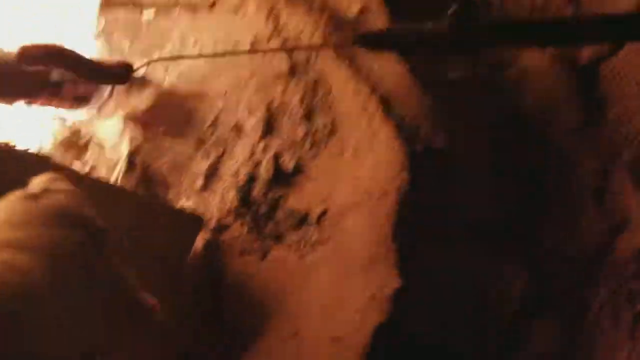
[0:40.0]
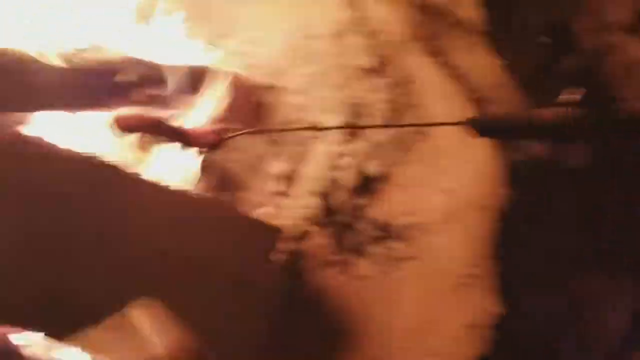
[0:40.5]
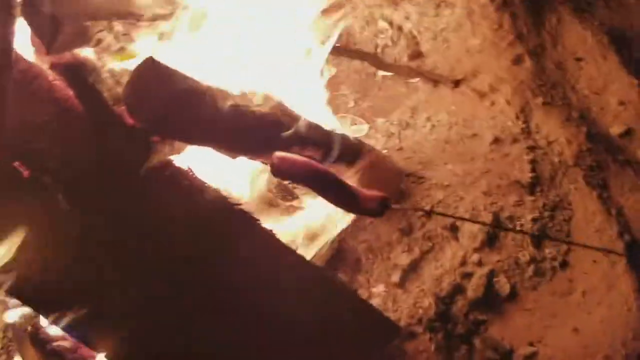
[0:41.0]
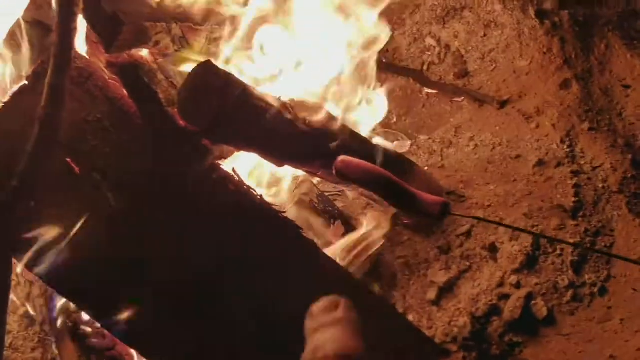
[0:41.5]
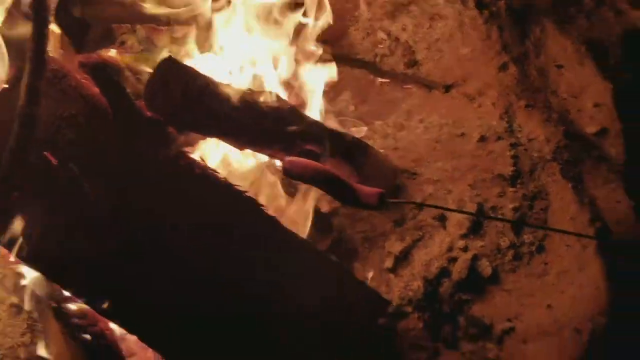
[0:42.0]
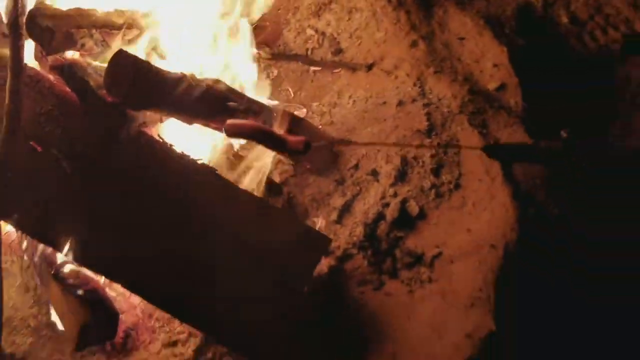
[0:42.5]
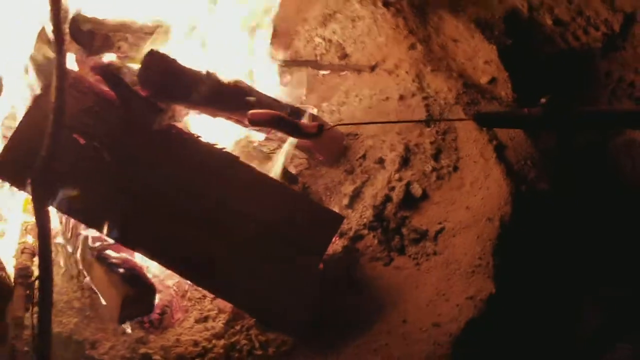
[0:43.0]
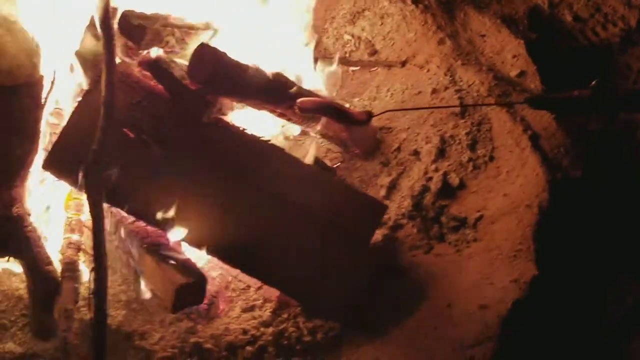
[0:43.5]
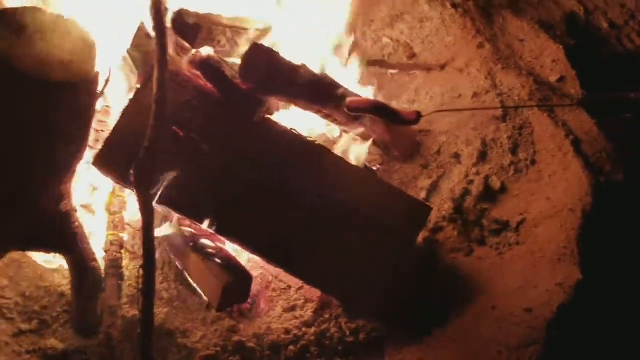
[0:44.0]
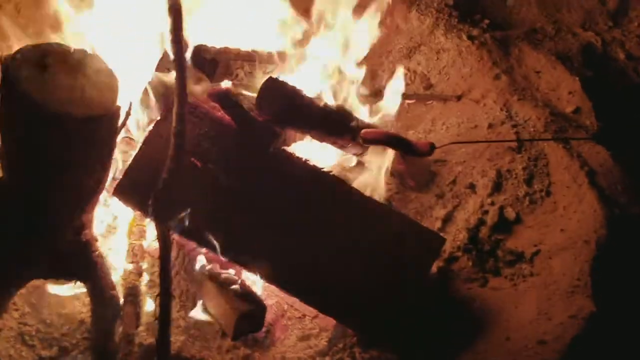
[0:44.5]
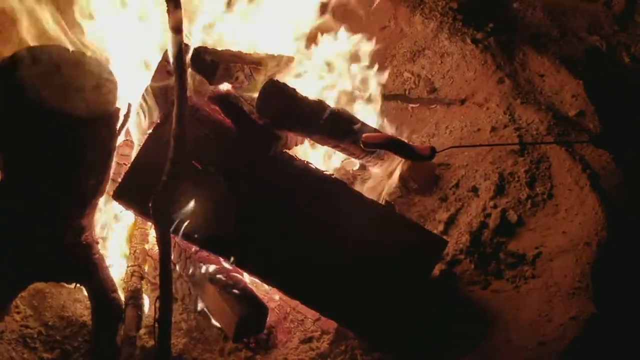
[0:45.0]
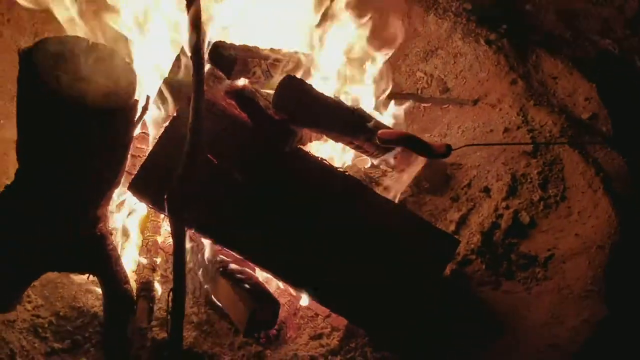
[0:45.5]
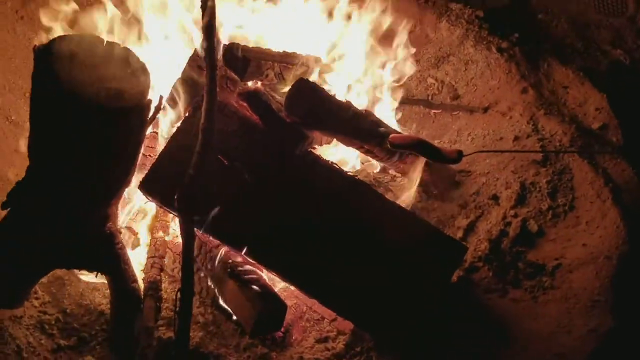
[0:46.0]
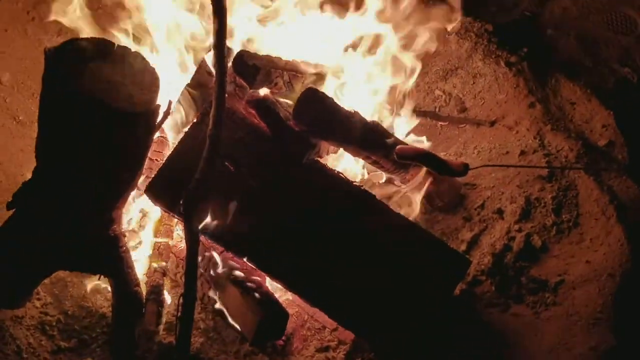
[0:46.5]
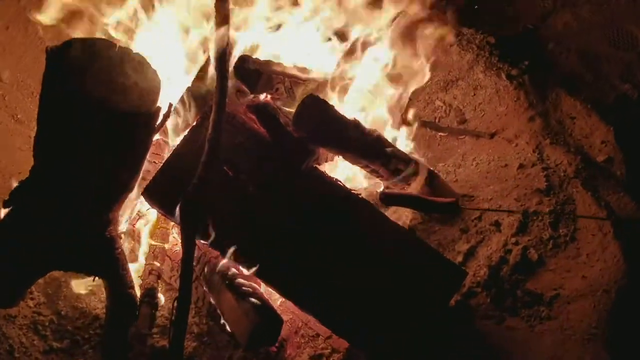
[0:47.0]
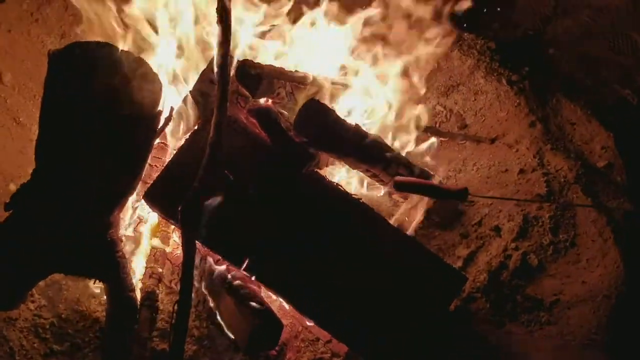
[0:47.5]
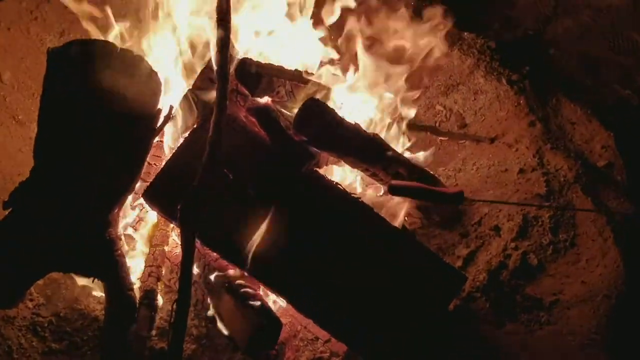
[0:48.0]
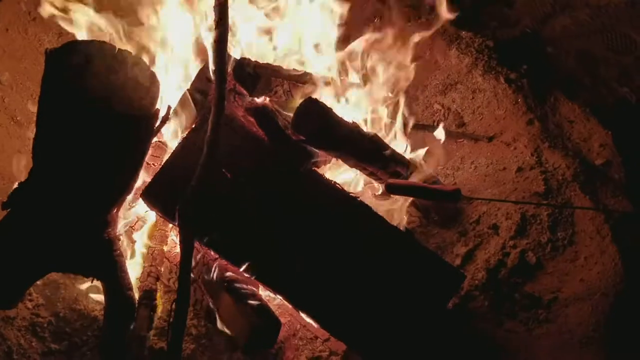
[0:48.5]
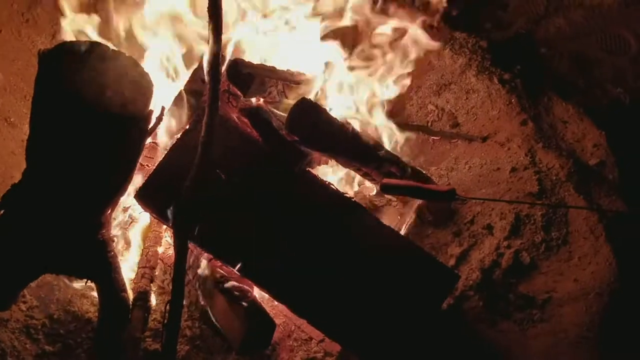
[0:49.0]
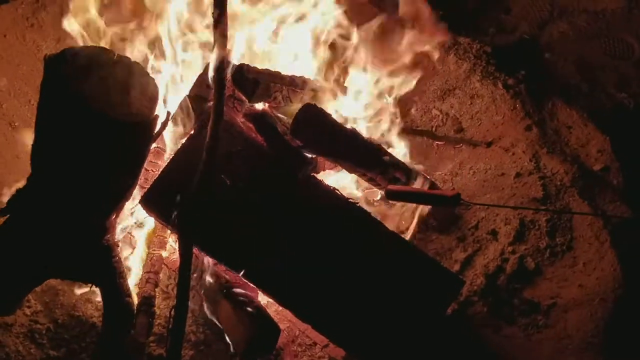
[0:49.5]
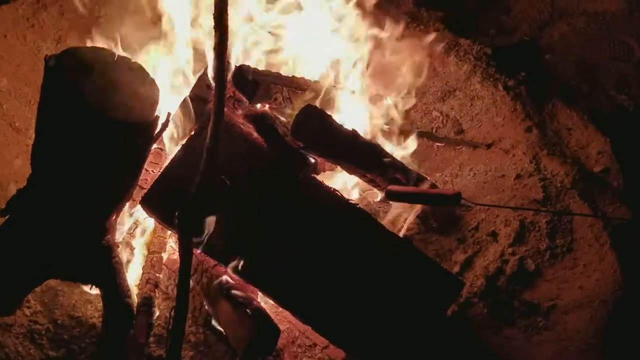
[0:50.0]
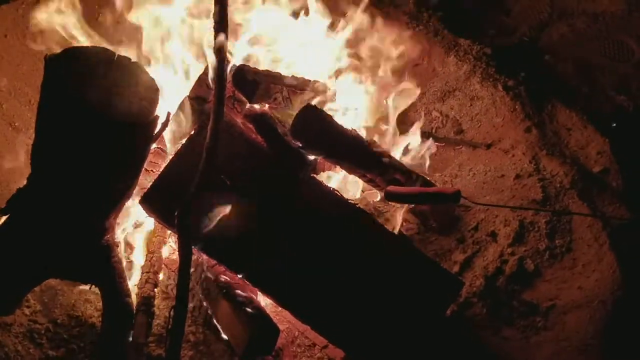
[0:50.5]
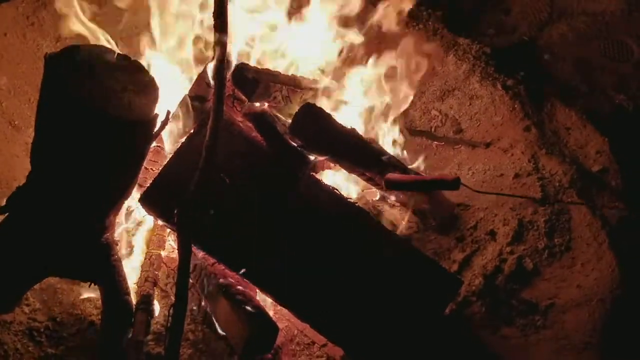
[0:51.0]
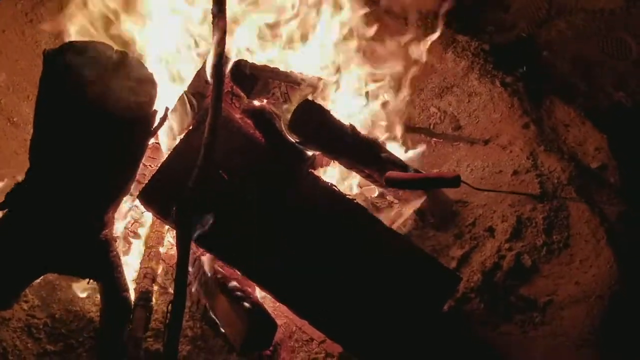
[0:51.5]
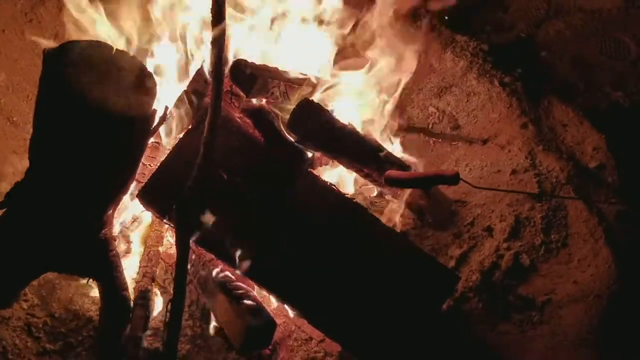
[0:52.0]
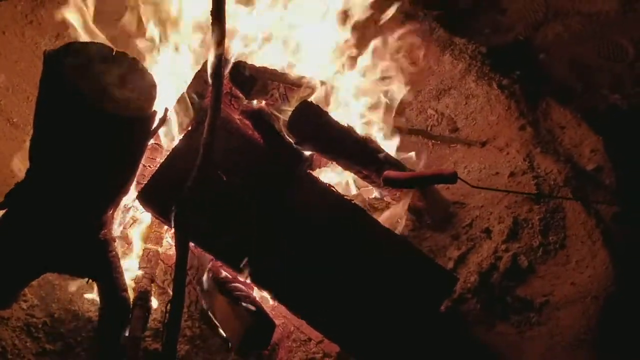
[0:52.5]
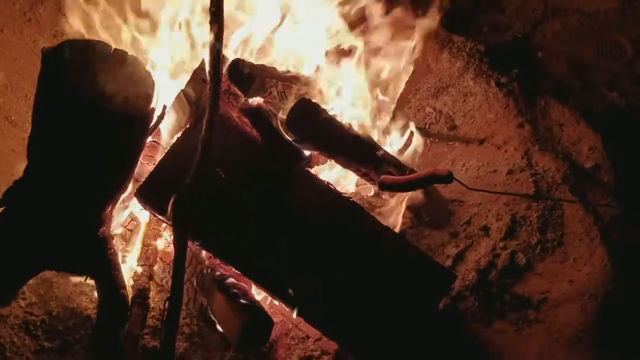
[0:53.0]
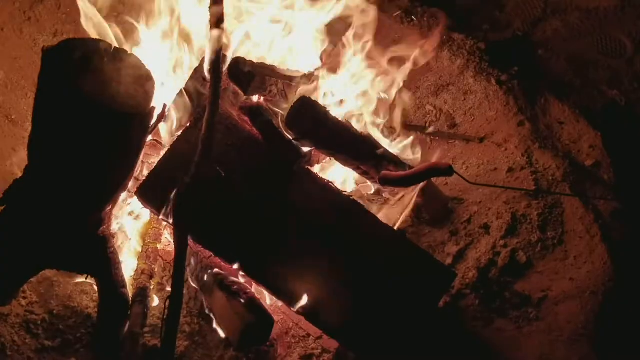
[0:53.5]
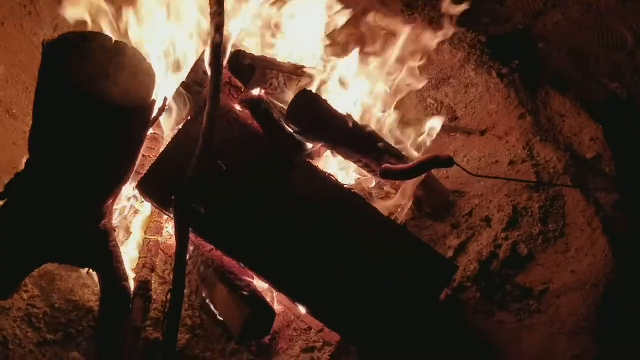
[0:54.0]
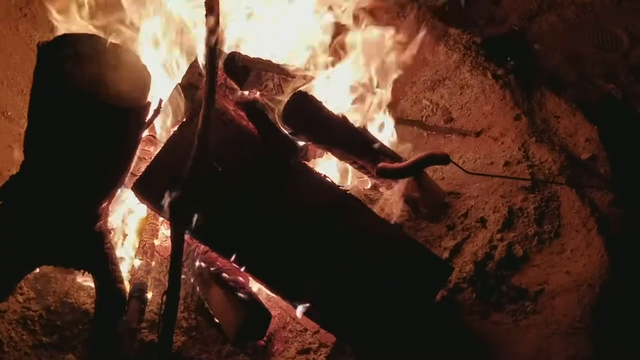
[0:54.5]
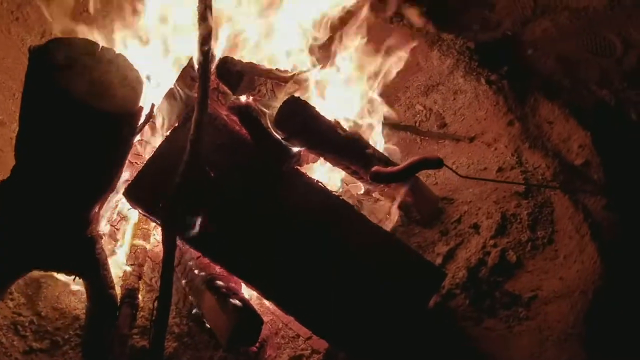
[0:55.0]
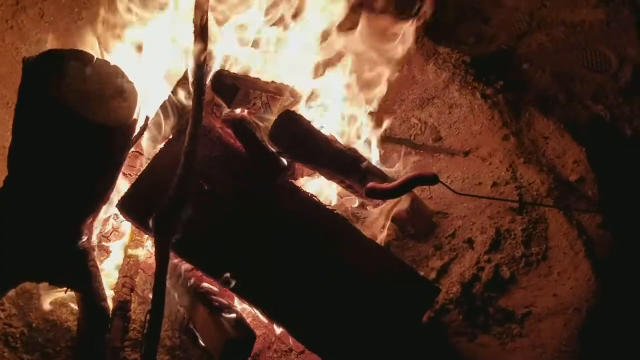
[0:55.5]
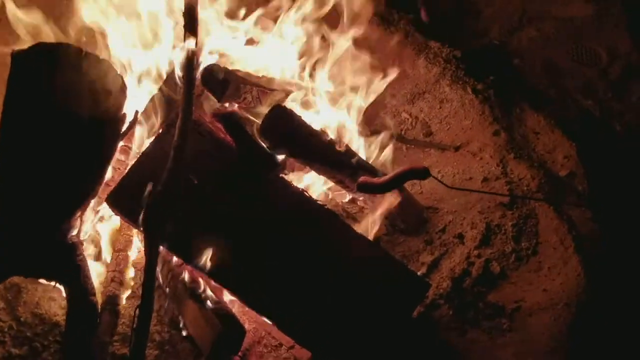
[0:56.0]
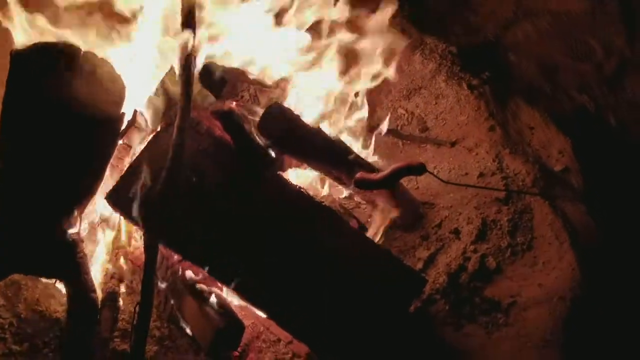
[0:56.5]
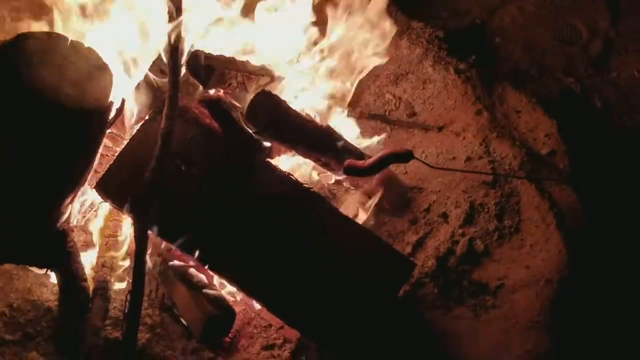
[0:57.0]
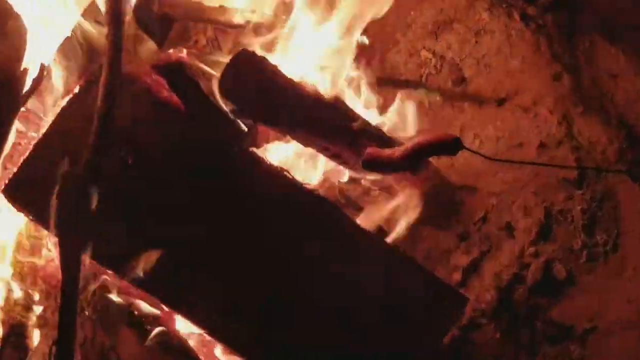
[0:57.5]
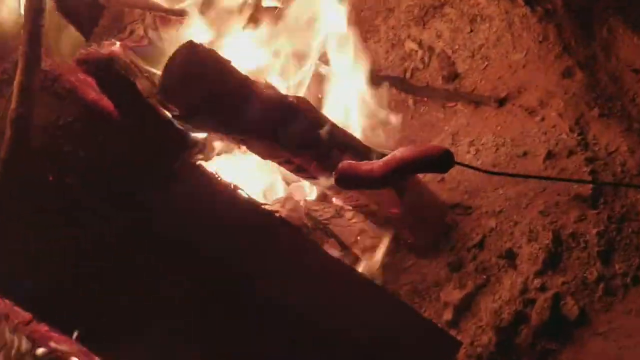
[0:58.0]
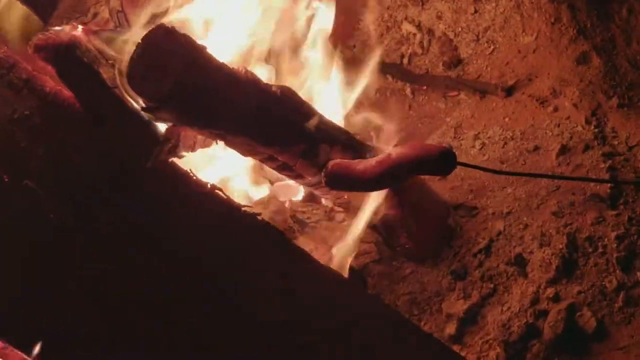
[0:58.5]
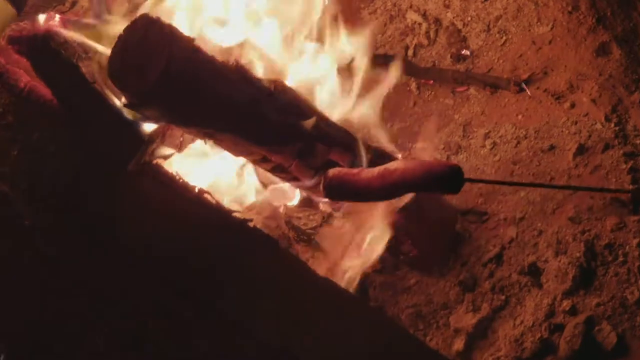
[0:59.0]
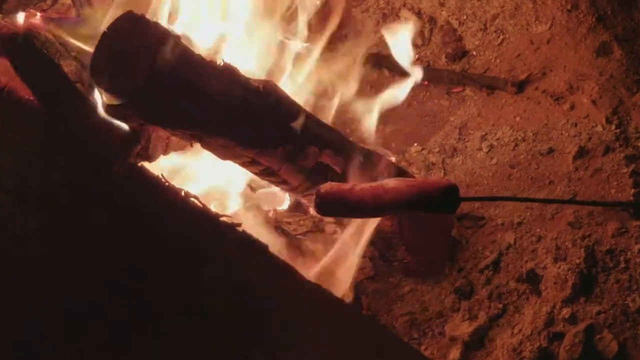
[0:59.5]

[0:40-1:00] A hand keeps appearing next to the block of firewood, fixing it, and smoke comes out of one piece of firewood. The person is still holding the sausage or Vienna to the fire, with the stick pointed at where the fire is.